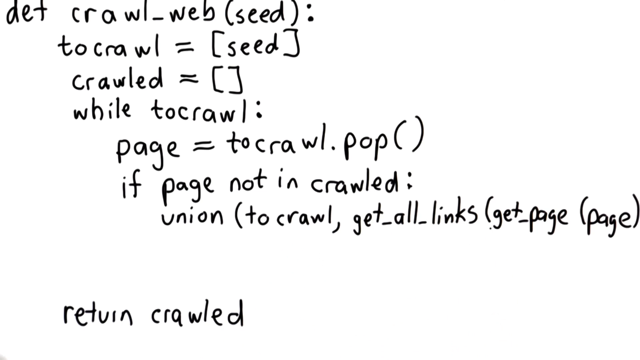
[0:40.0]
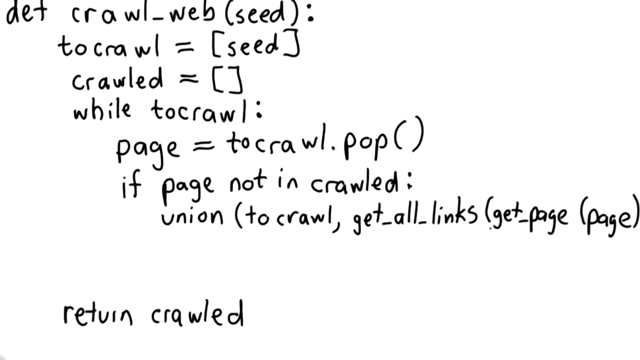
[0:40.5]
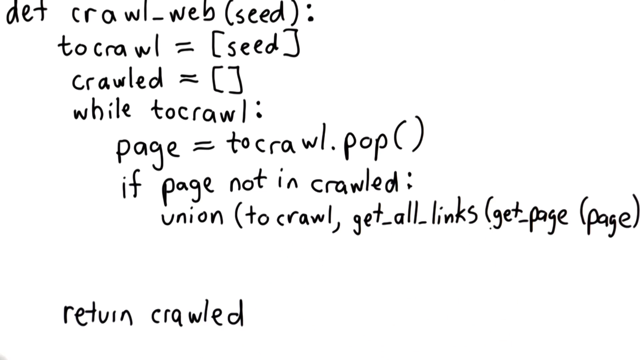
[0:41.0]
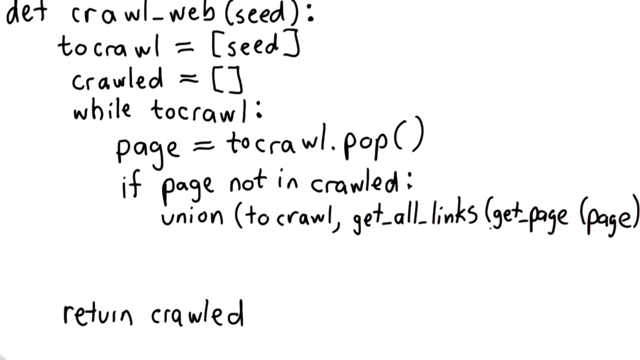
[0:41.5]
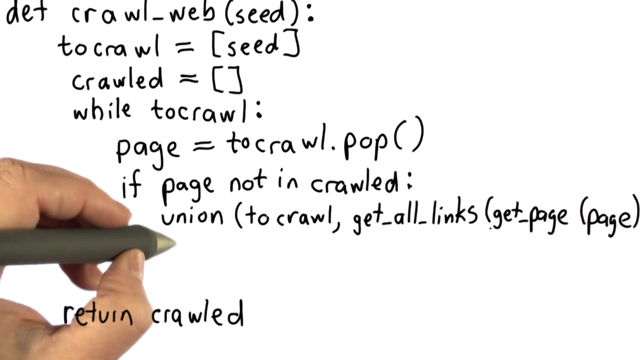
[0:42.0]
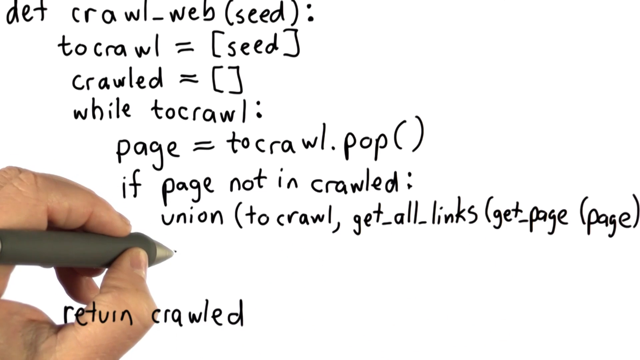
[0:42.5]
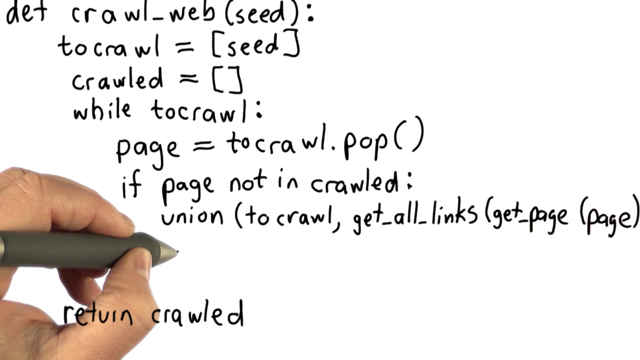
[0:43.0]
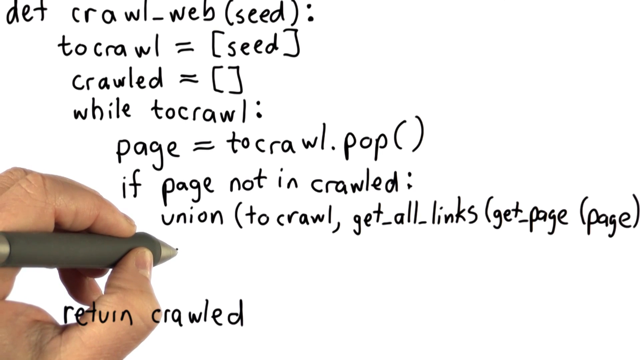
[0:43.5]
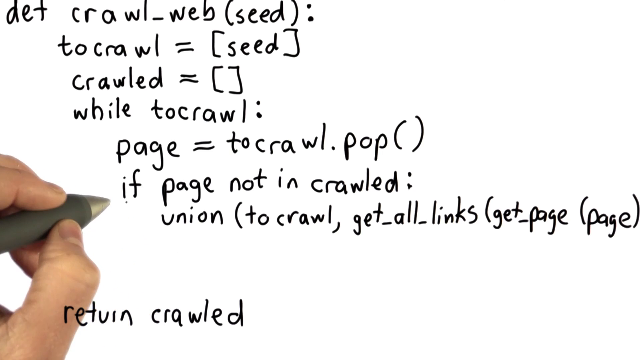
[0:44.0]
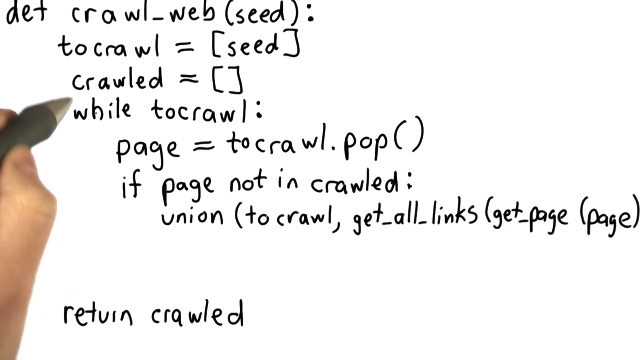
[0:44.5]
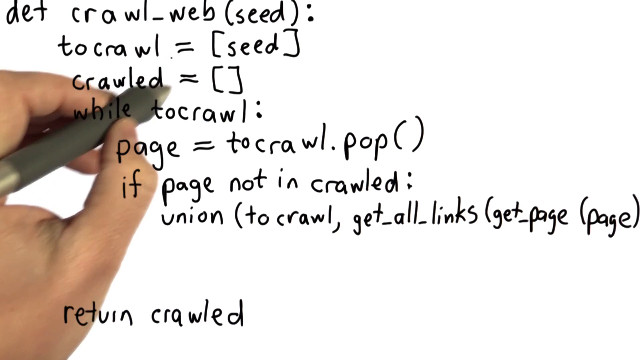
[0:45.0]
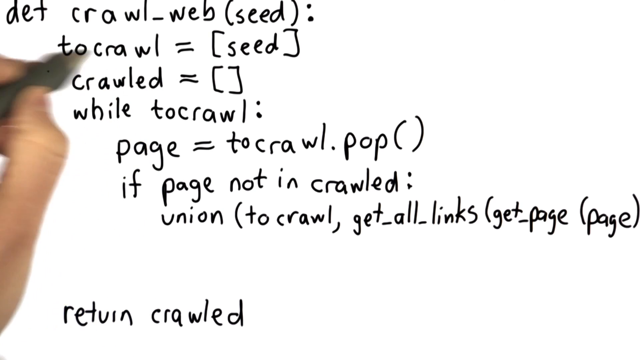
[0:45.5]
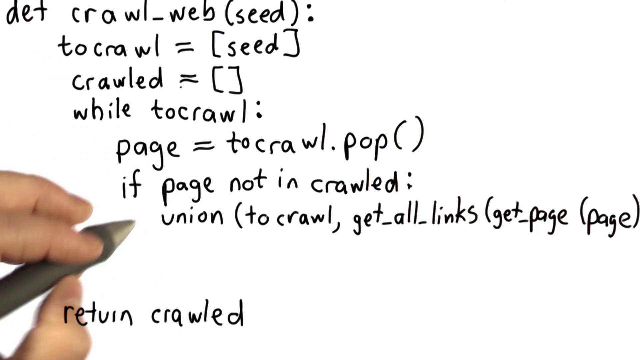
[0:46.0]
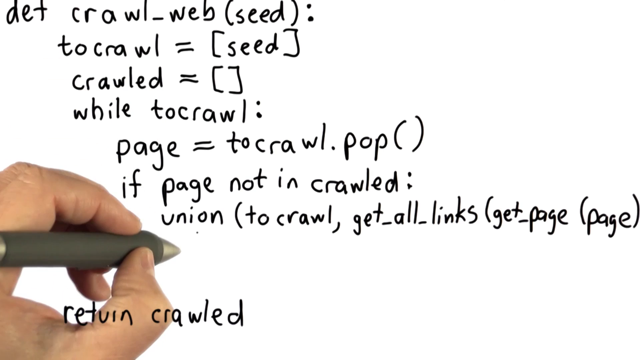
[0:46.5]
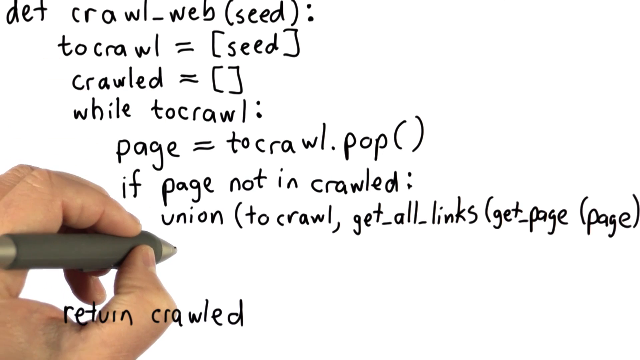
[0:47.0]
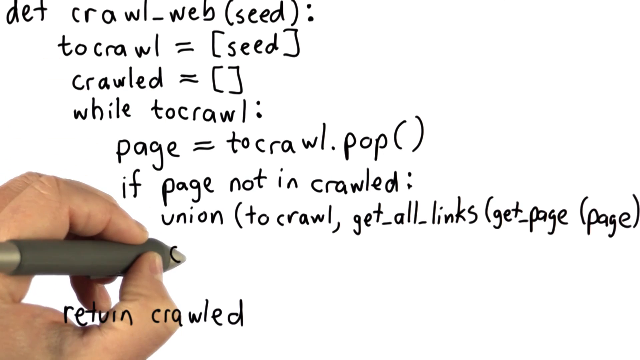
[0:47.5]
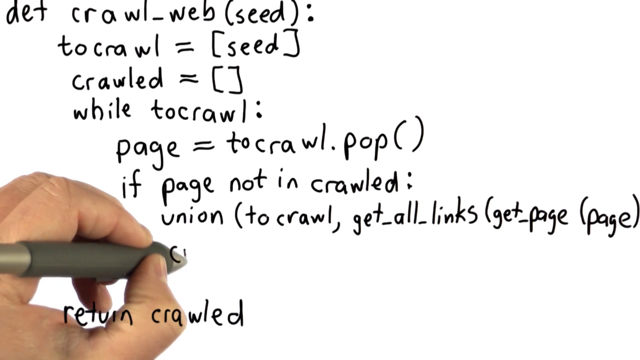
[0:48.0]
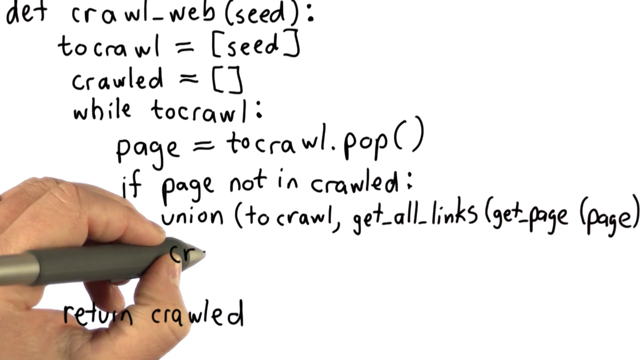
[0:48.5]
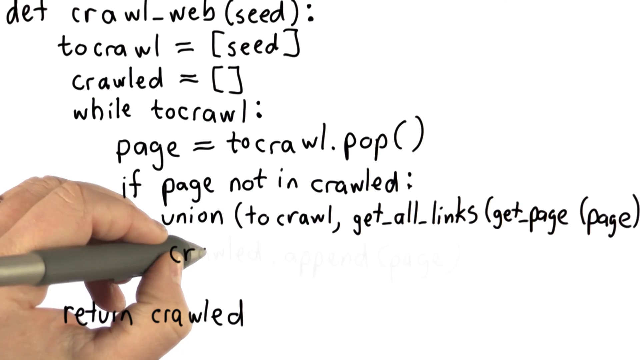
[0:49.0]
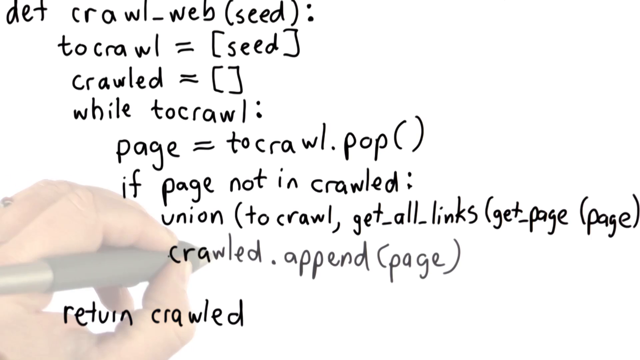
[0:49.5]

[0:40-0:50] Still looking at the same formula, the user points at a different part: the third line, "crawled = ()". After pointing at it, the user writes more, adding a new last line that reads "crawled.append" with "page" in parentheses. Pointing at the third line seems to lead to the result written on the new last line, suggesting the line that previously seemed last was not the final result. The user then stops momentarily.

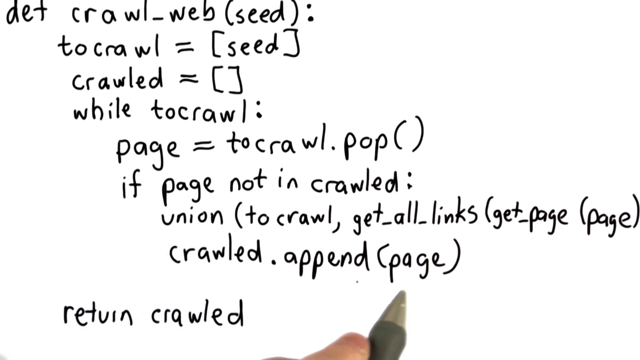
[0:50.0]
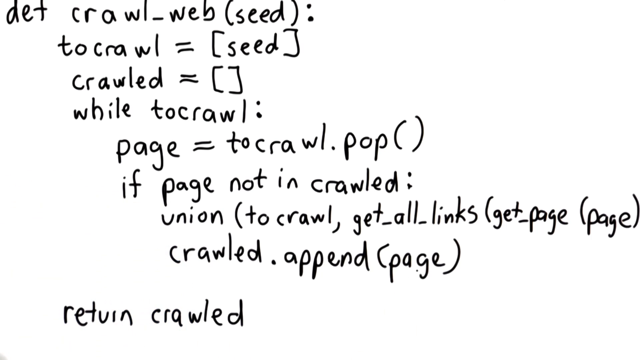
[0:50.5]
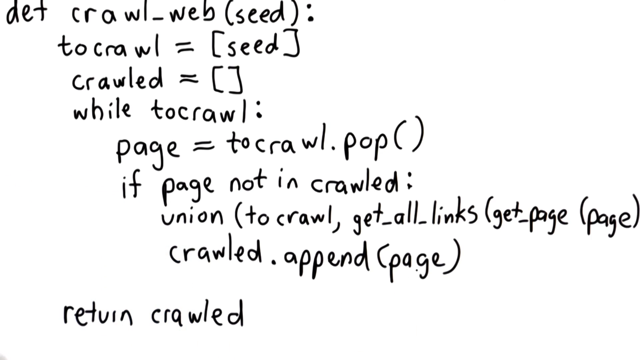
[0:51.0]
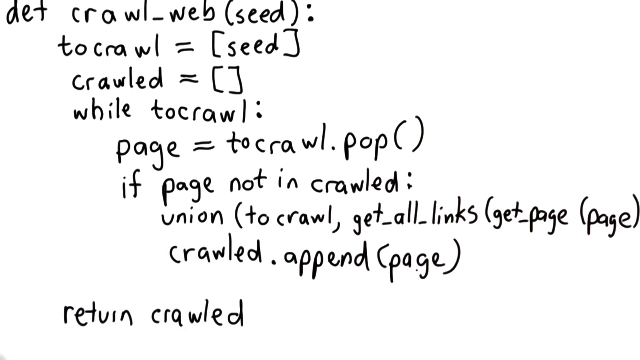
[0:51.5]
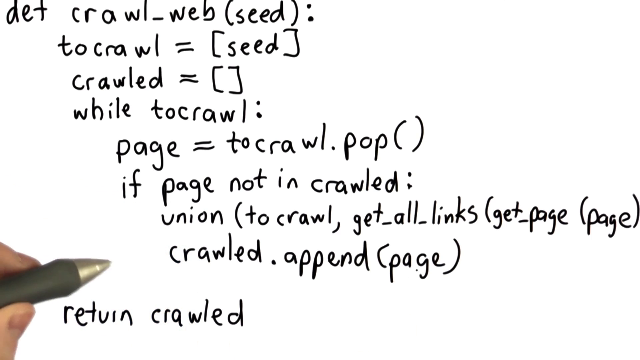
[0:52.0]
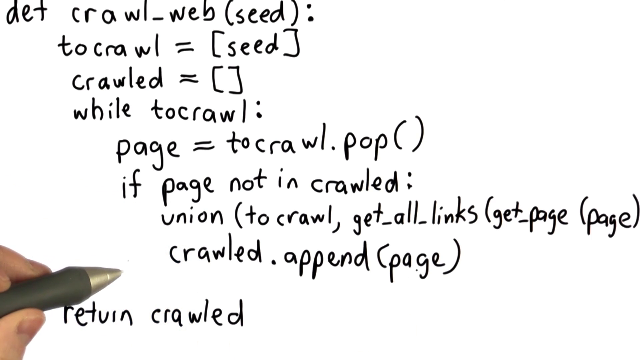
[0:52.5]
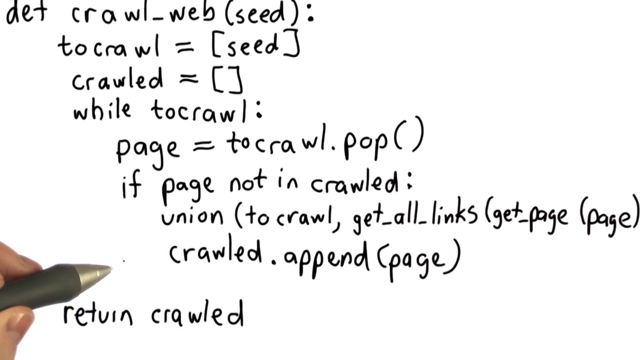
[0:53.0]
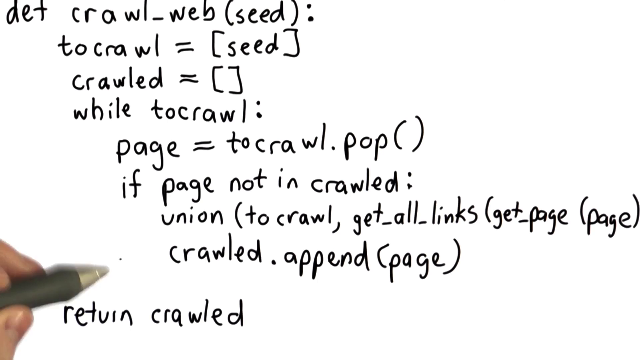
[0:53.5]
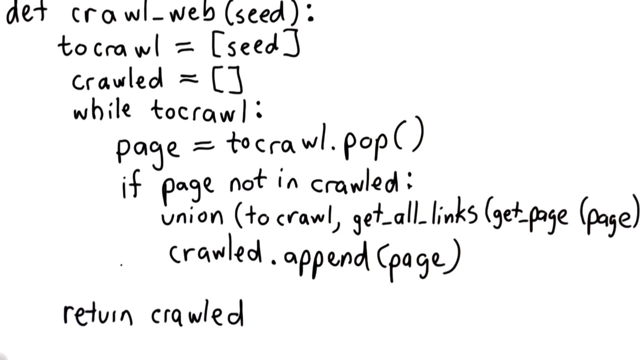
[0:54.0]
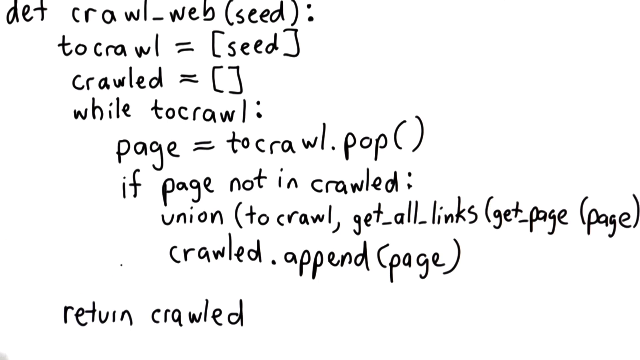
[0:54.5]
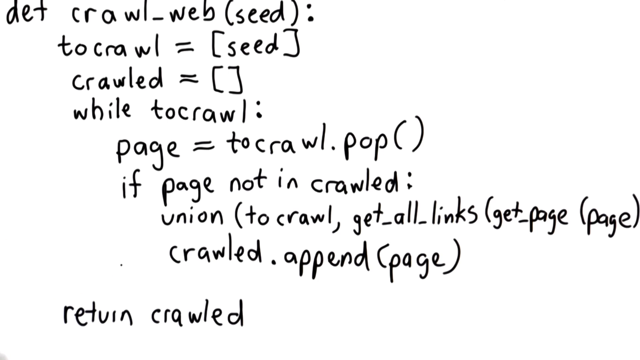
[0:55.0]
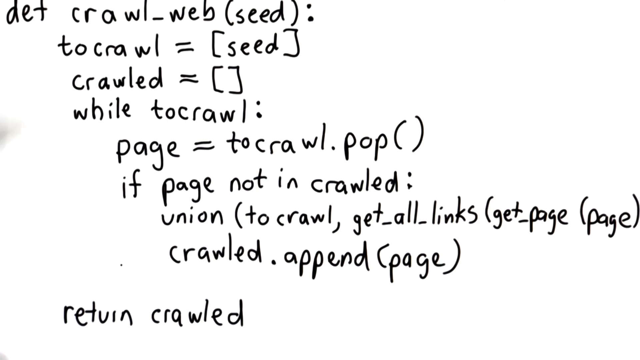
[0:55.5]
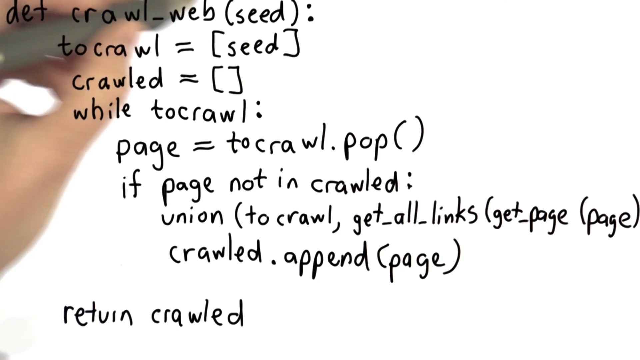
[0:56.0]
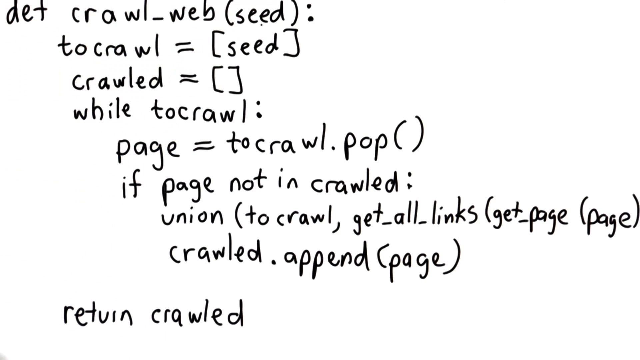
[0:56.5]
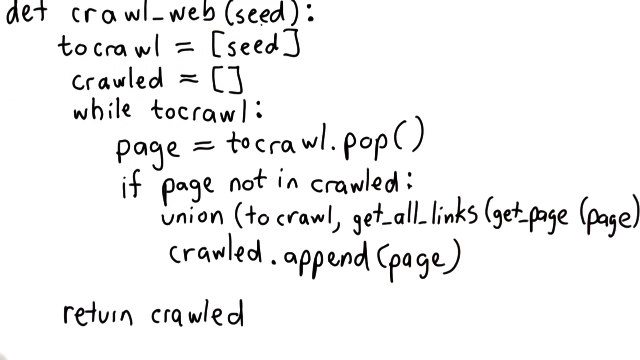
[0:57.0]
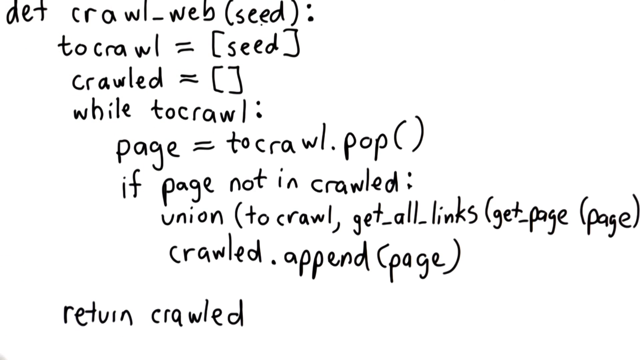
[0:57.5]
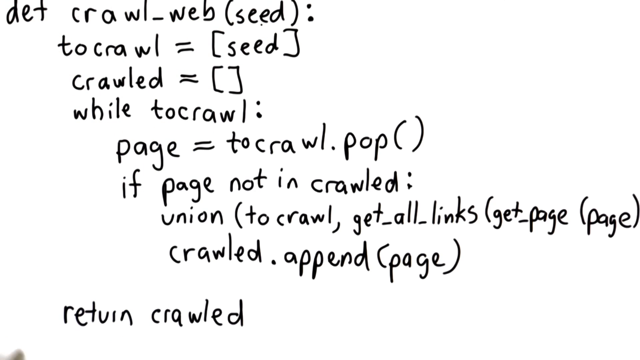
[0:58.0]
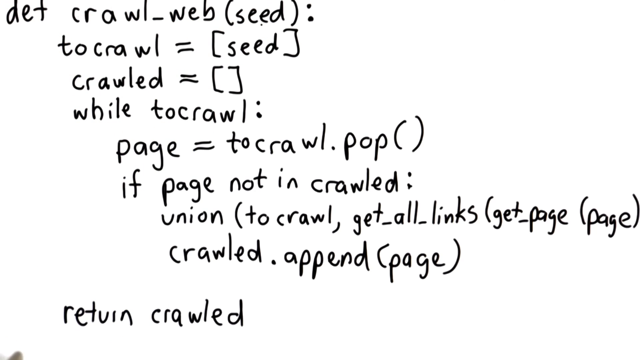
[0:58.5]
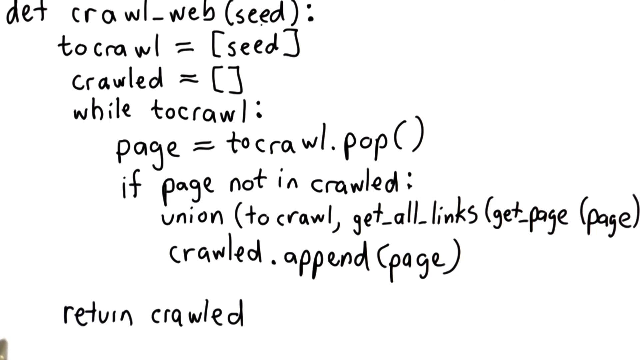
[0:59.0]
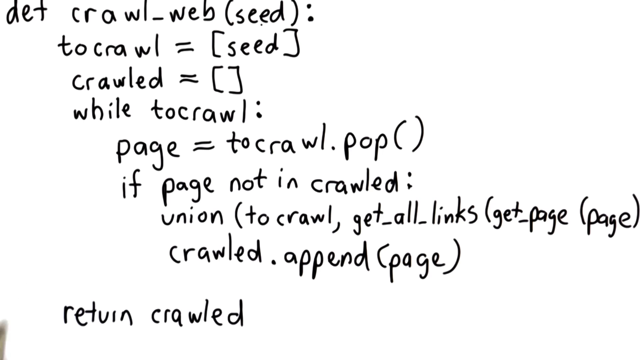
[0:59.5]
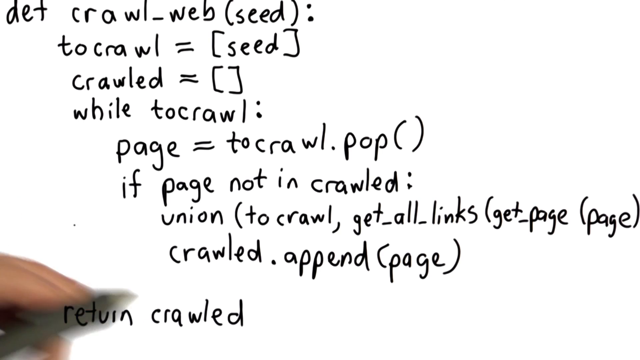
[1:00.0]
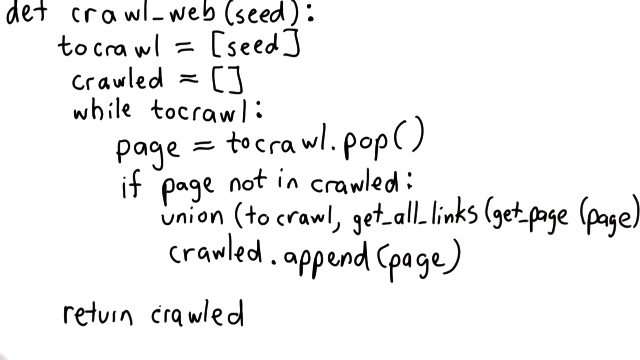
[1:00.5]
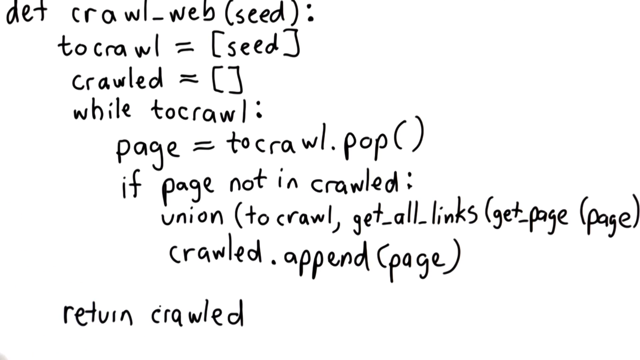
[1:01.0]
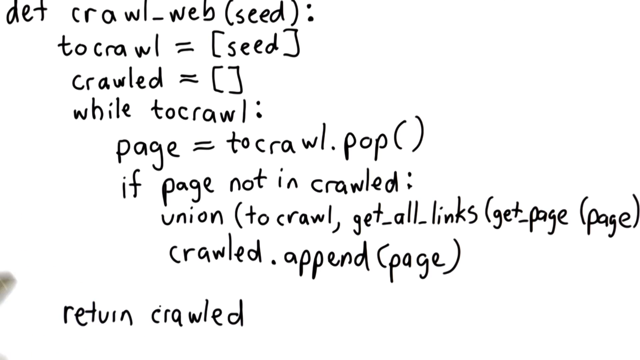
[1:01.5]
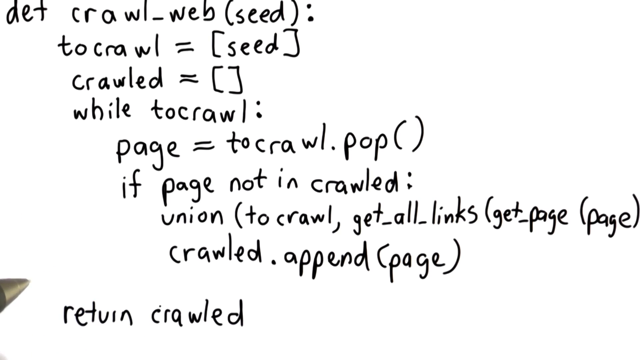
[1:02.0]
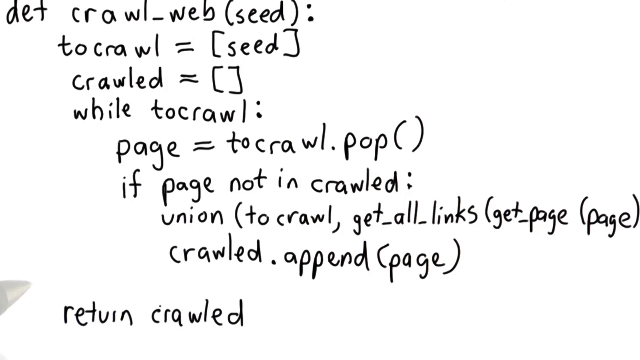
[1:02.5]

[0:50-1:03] The user looks at the formula without emphasizing any particular line, instead using the pen to point to the formula as a whole, apparently to show how everything comes together. The pen does not stop at any line but moves rapidly over the entire formula. There is also a bottom line that reads "return crawled".